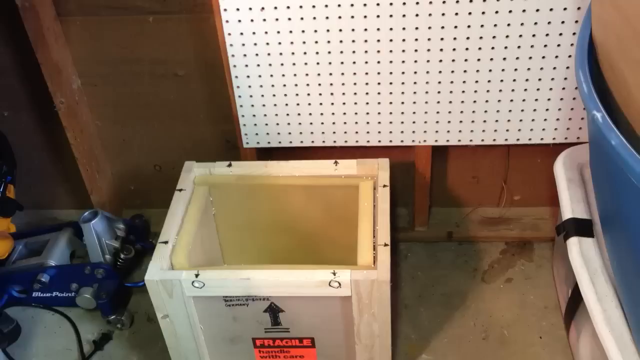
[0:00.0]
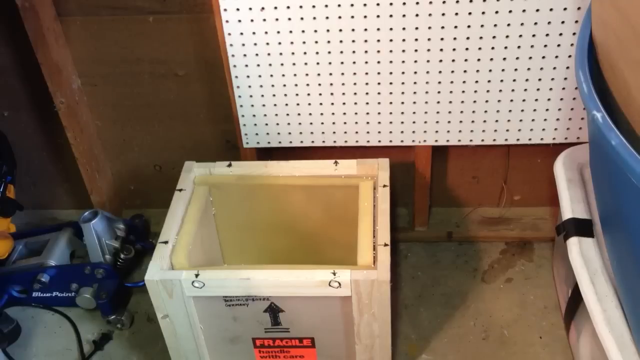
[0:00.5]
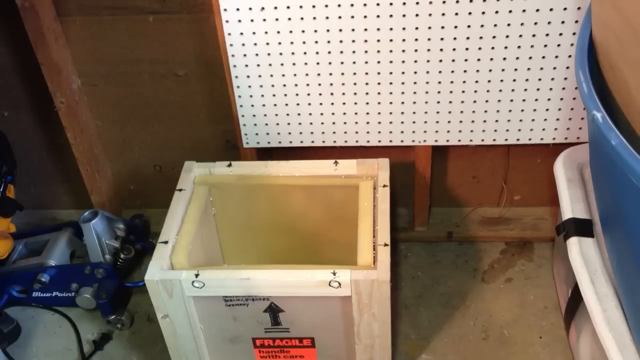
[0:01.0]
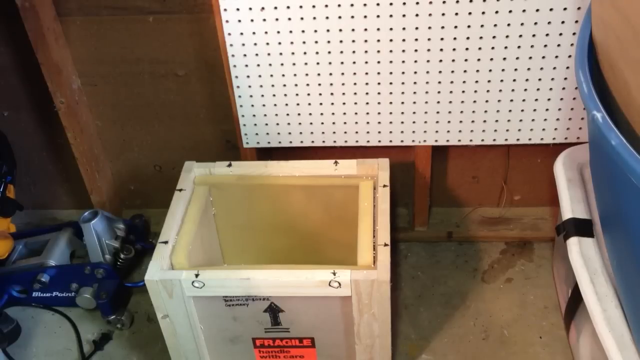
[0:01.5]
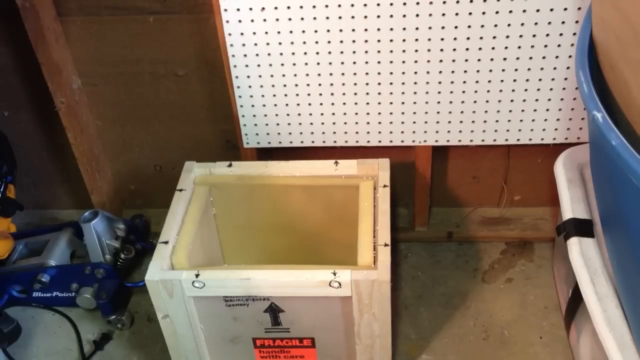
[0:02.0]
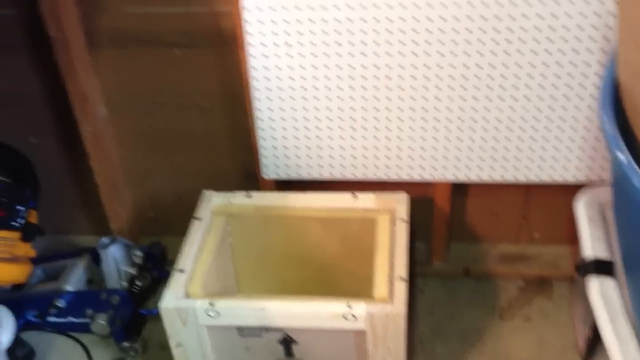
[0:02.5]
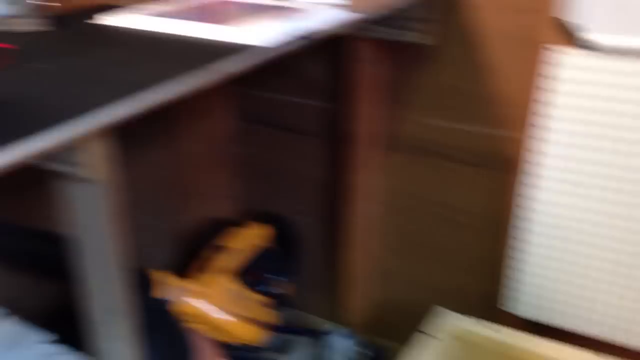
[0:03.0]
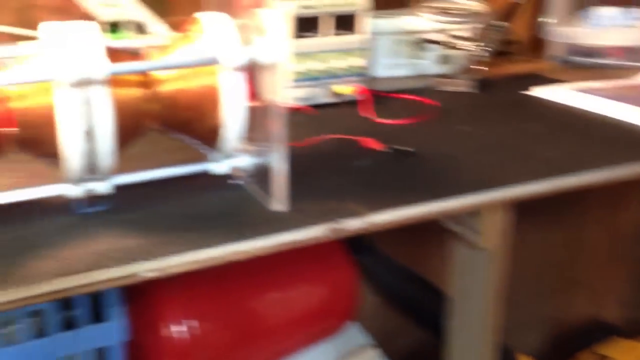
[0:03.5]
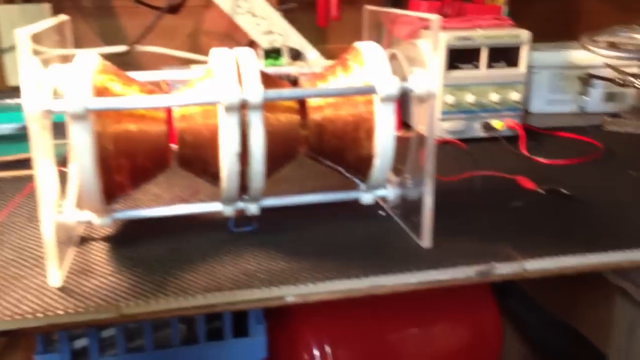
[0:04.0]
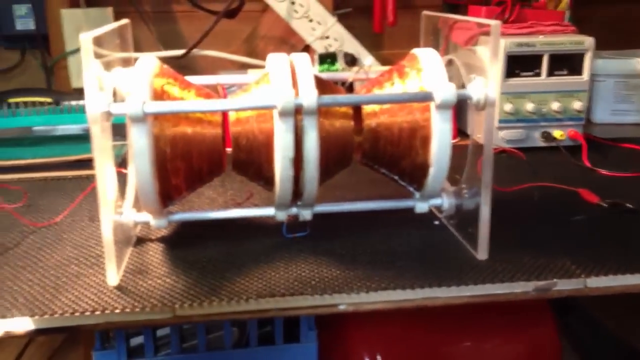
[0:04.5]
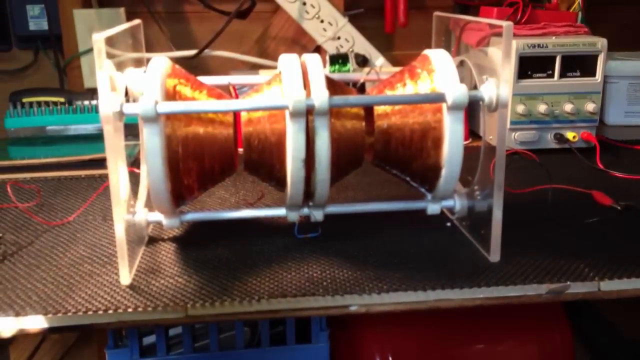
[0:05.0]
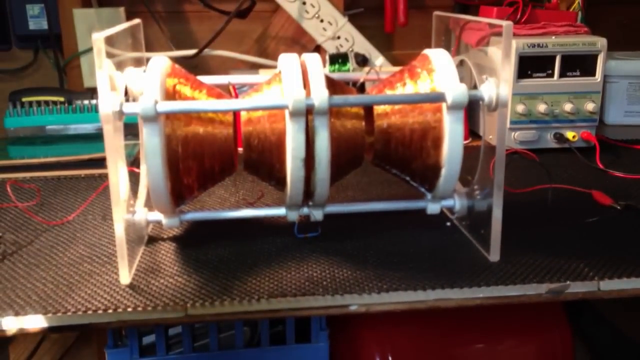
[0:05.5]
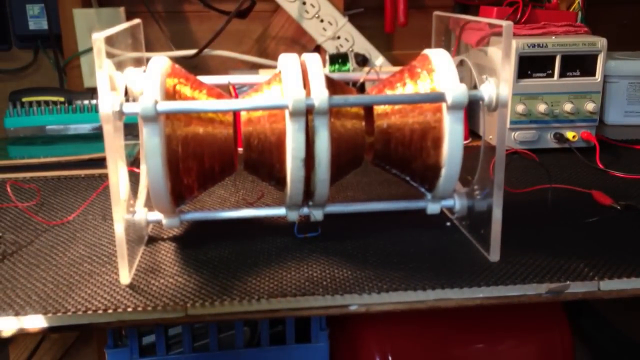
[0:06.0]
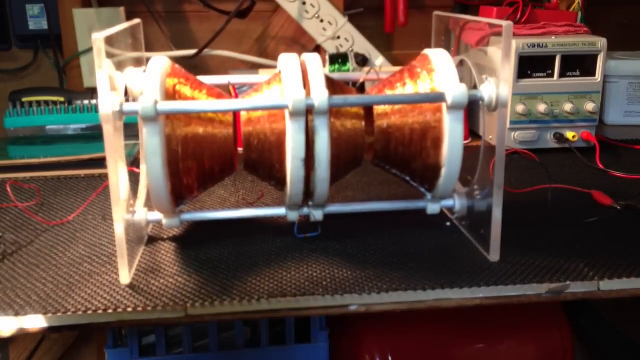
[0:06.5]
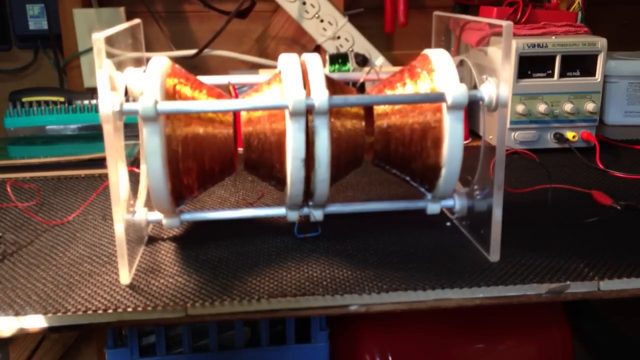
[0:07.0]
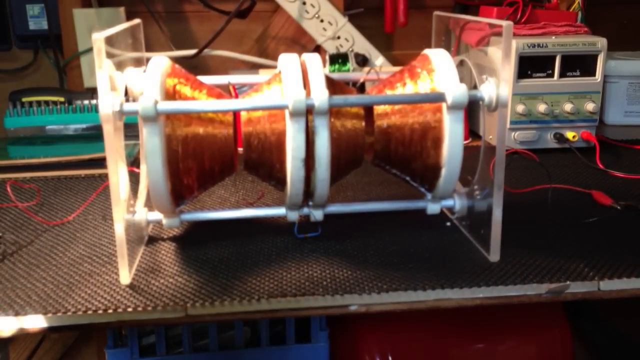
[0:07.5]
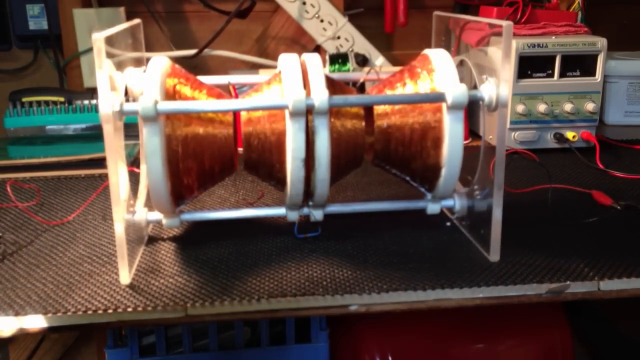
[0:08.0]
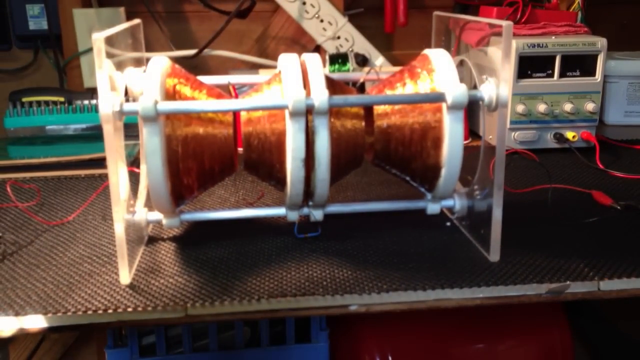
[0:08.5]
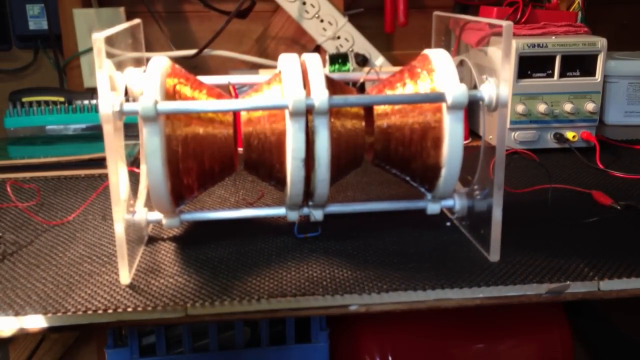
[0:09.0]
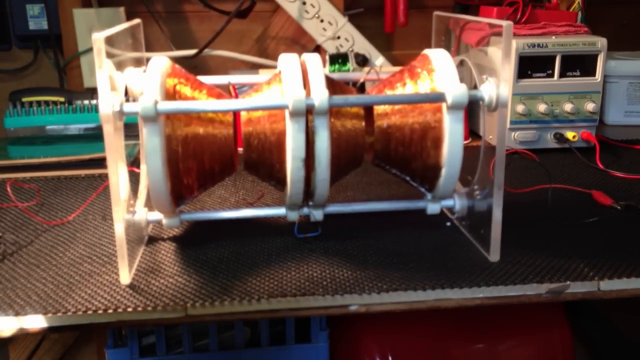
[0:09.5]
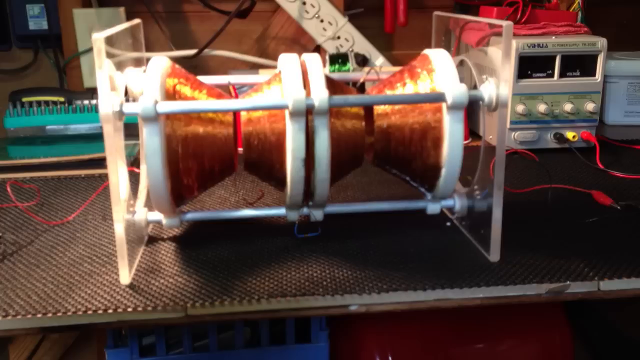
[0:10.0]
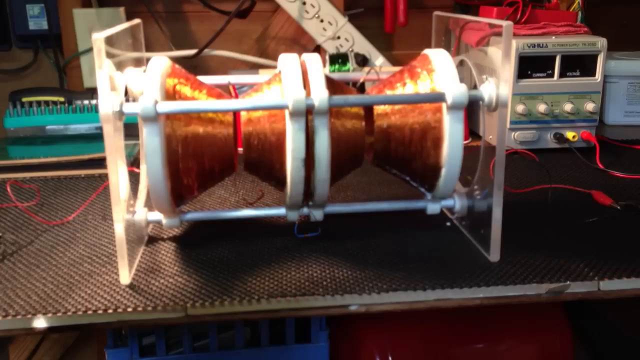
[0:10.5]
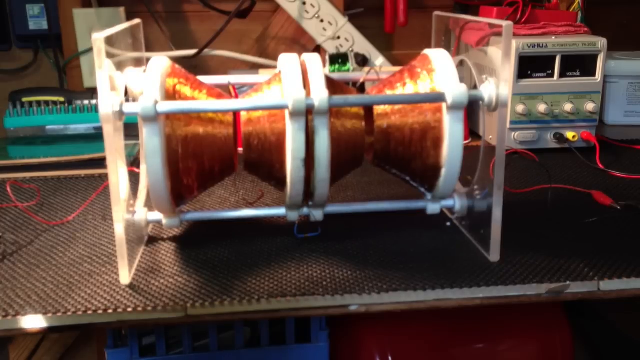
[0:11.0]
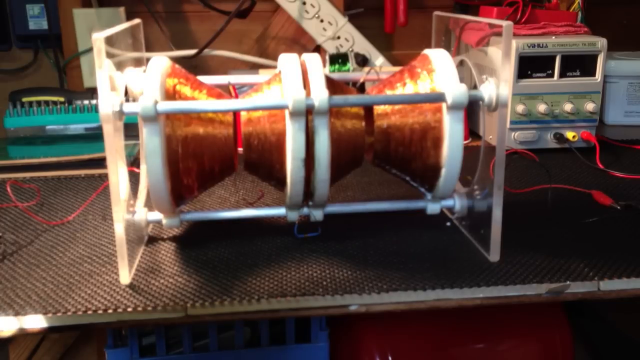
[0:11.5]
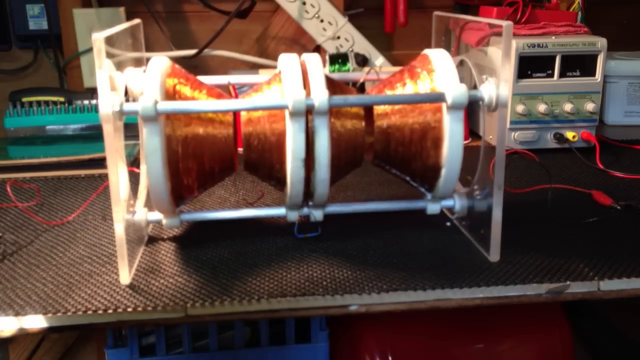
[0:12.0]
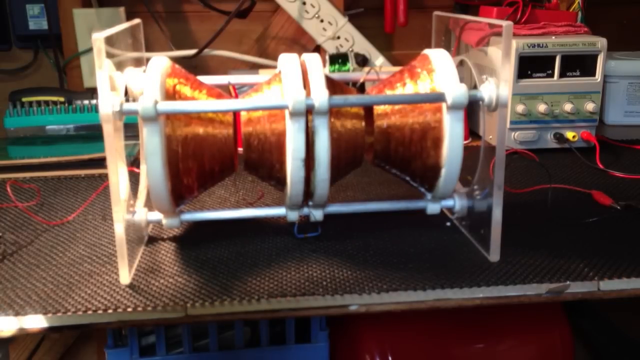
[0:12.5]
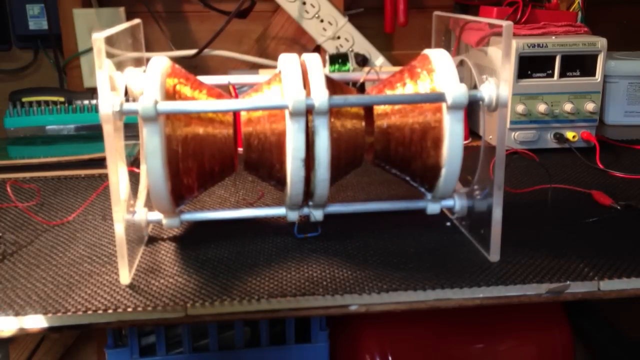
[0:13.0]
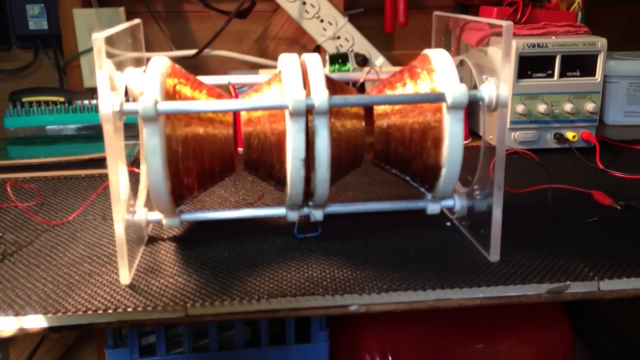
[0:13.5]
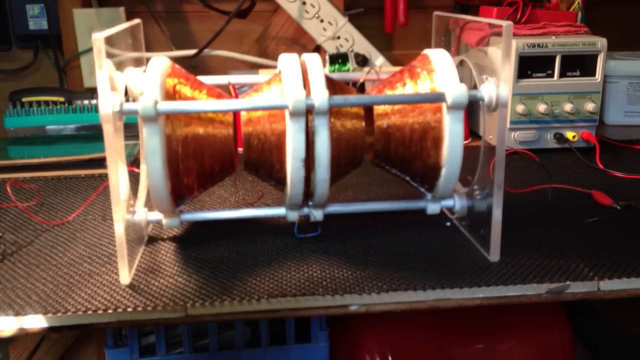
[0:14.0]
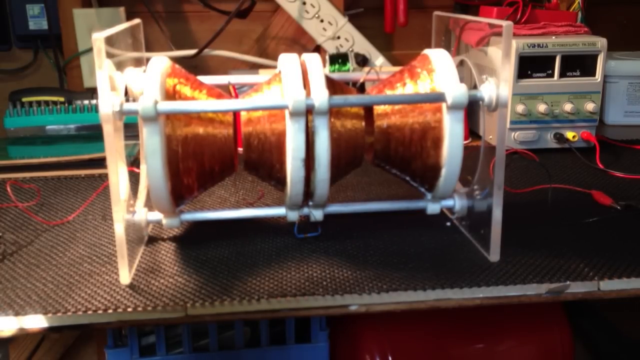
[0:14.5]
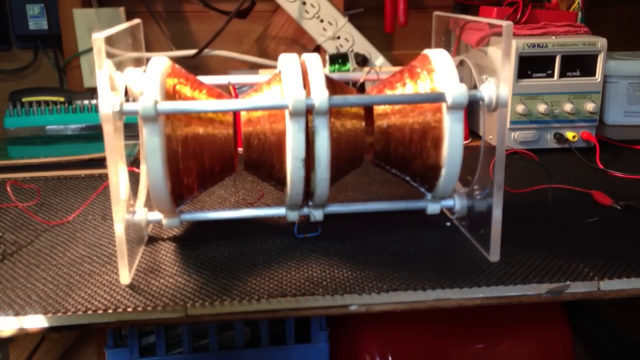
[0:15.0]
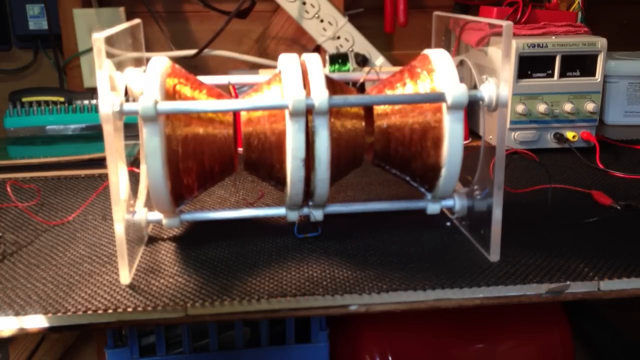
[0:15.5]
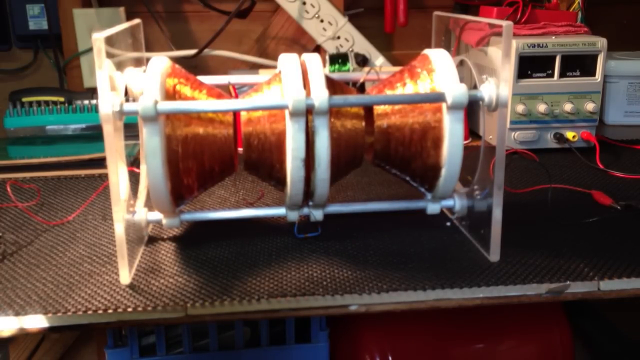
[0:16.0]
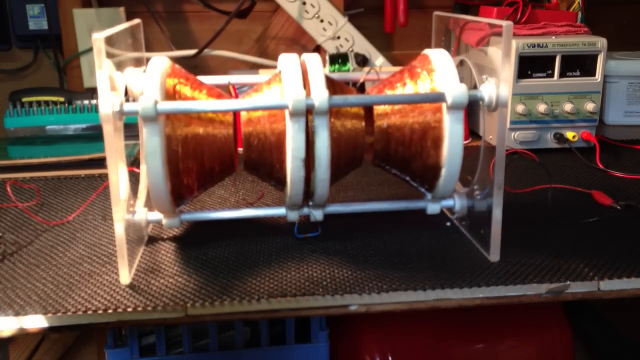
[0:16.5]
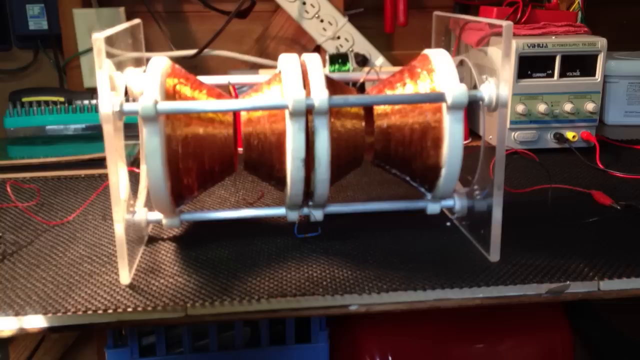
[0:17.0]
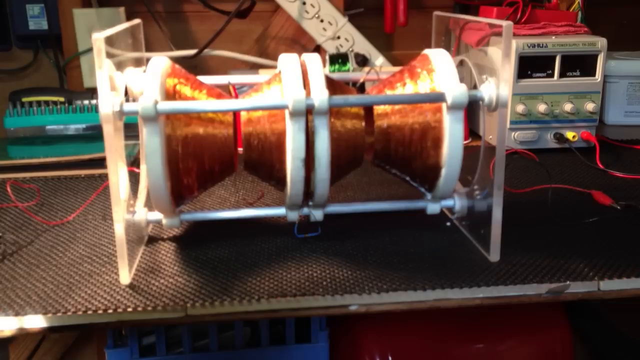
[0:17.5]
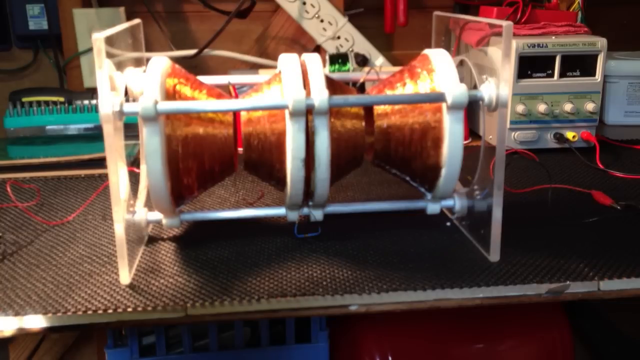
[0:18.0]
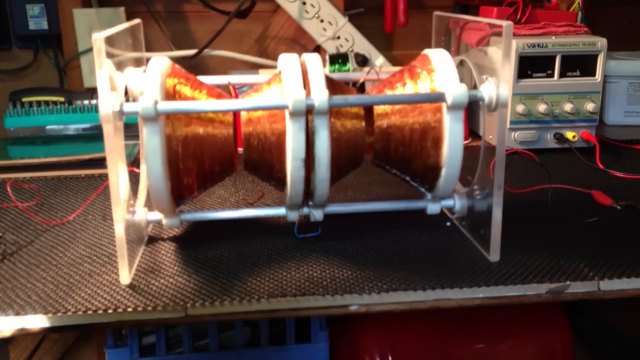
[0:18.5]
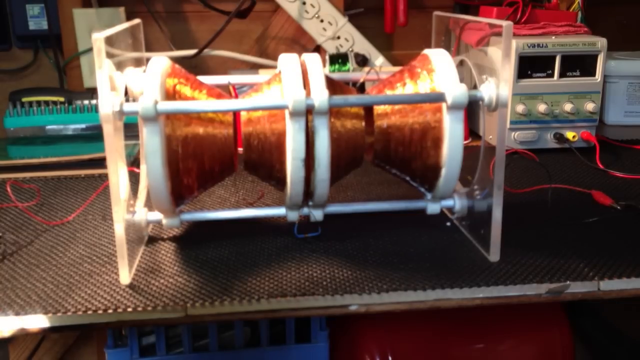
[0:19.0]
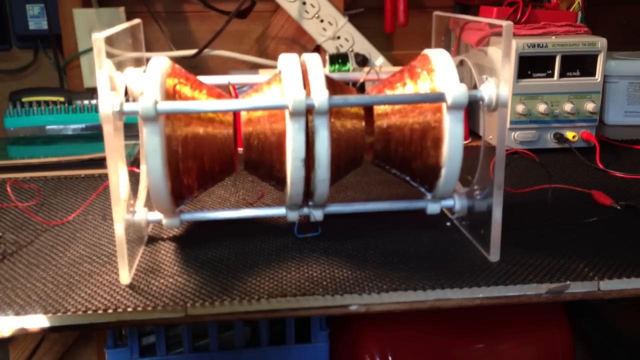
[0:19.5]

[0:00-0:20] A box is on the ground, and the camera pans to the left to show an apparatus that looks like copper wound around a yo-yo or diablo type thing. It is an electronic project, with the copper wound all around a white frame forming what are sort of two cylinders. It is on a workbench, with something like a voltmeter machine on the right-hand side, screwdriver bits on the left-hand side, and something like an anti-slip mat on top of the table. The sides of the apparatus have clear perspex and are attached to metal rods, which are suspended in the device. The scale is hard to tell, but it is quite big, apparently about 30 cm by 25 cm high. The camera is focused in on the device.